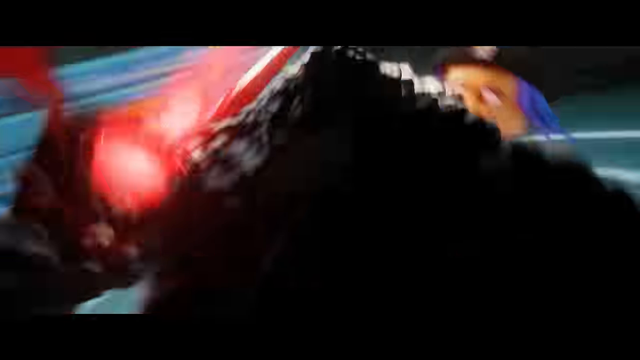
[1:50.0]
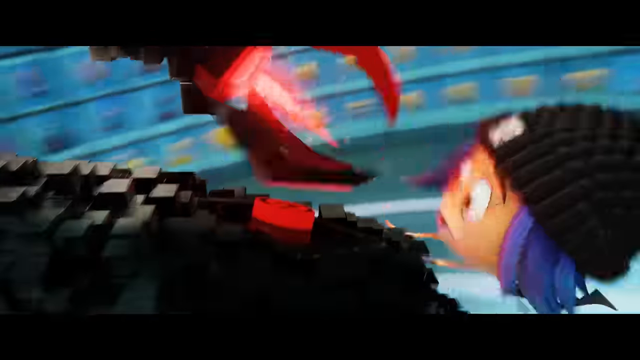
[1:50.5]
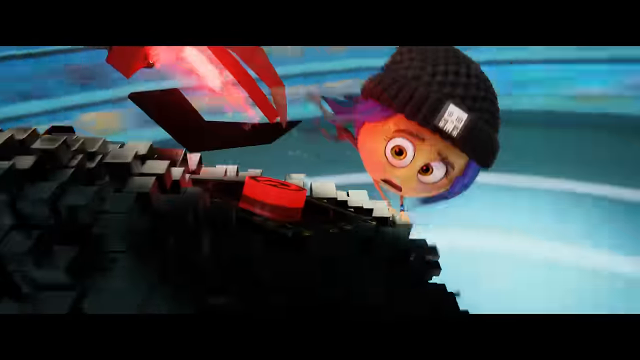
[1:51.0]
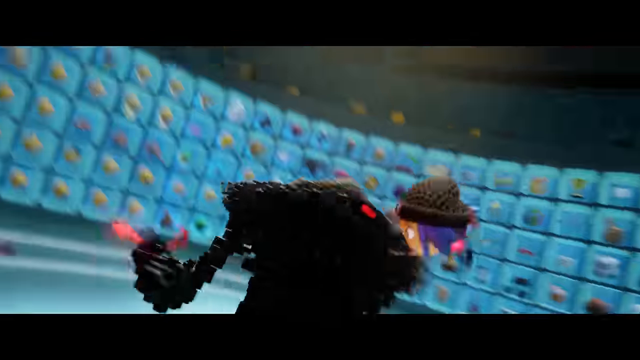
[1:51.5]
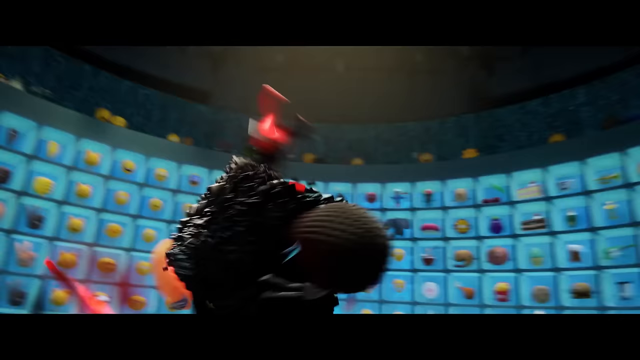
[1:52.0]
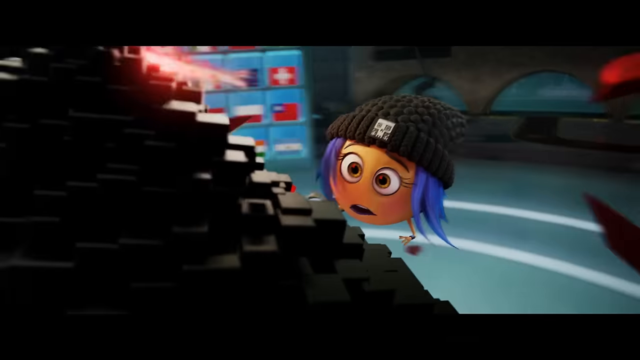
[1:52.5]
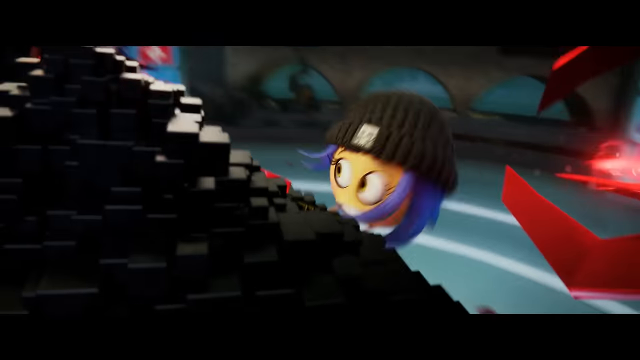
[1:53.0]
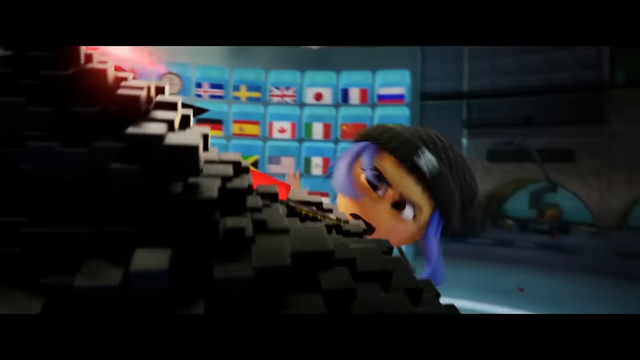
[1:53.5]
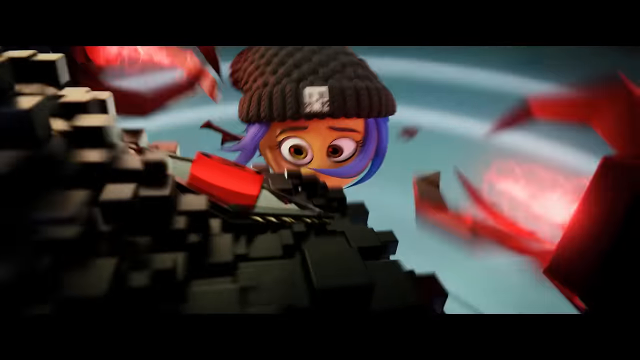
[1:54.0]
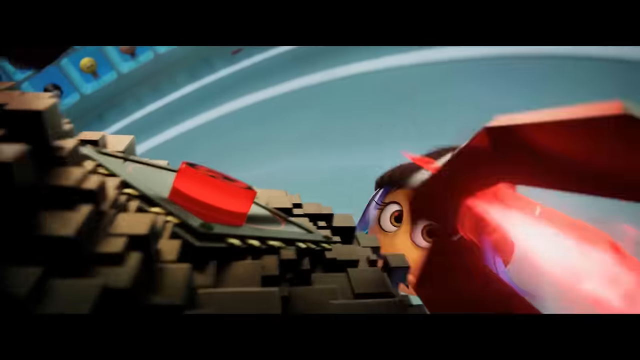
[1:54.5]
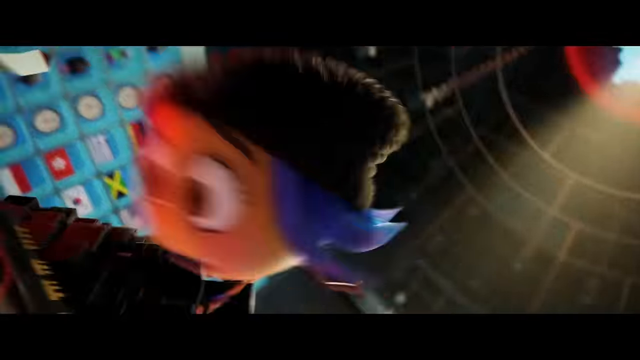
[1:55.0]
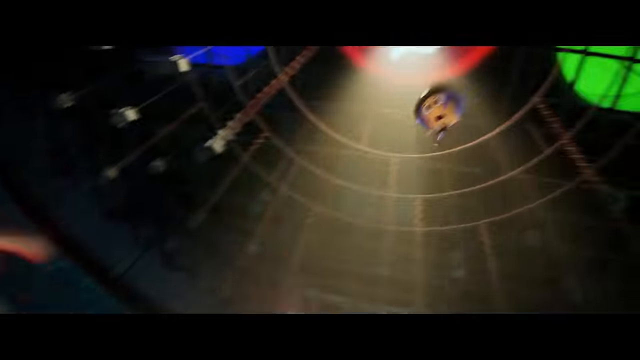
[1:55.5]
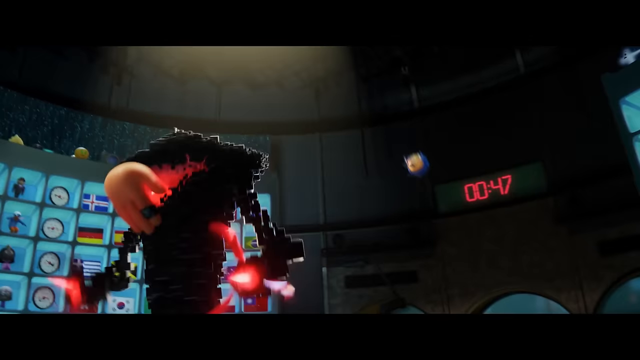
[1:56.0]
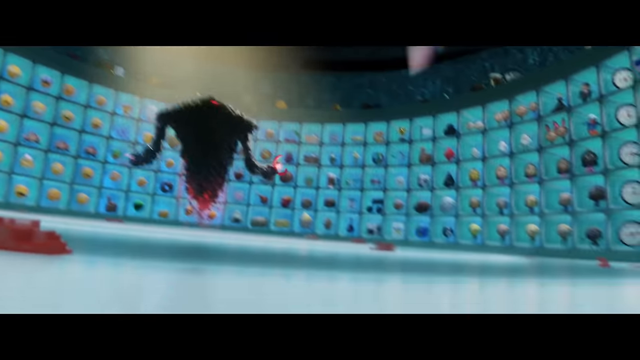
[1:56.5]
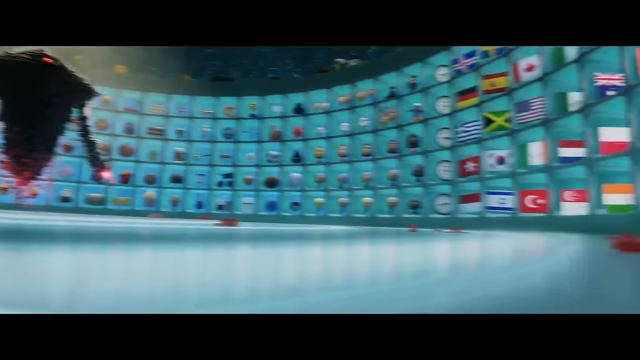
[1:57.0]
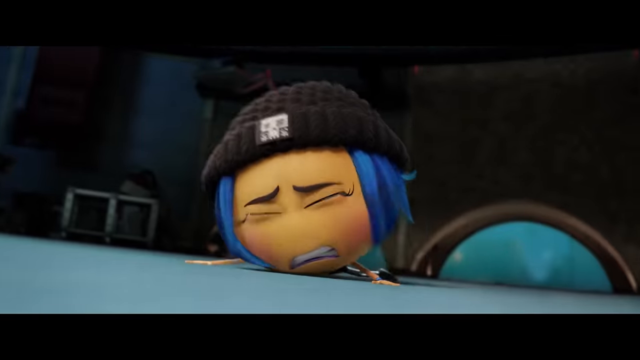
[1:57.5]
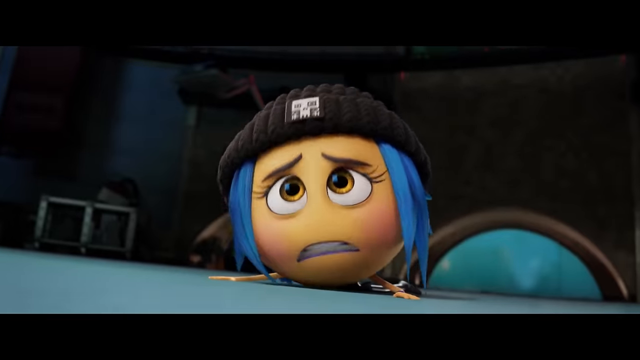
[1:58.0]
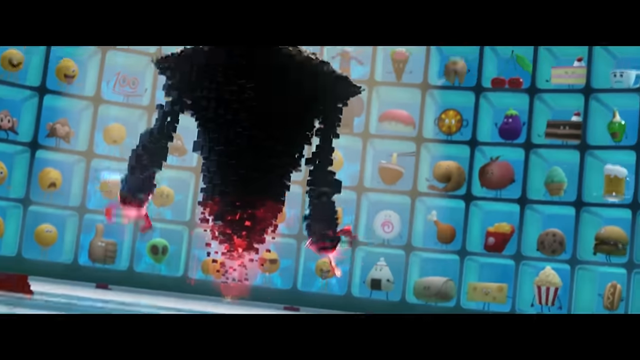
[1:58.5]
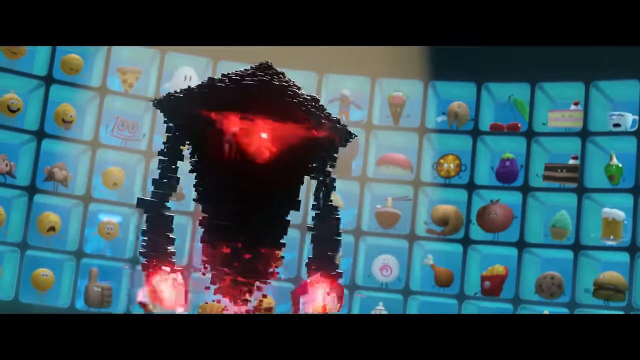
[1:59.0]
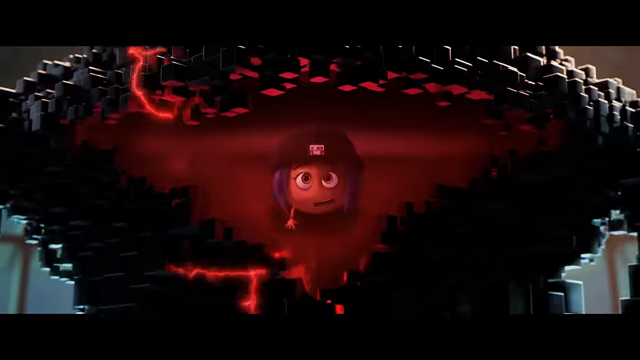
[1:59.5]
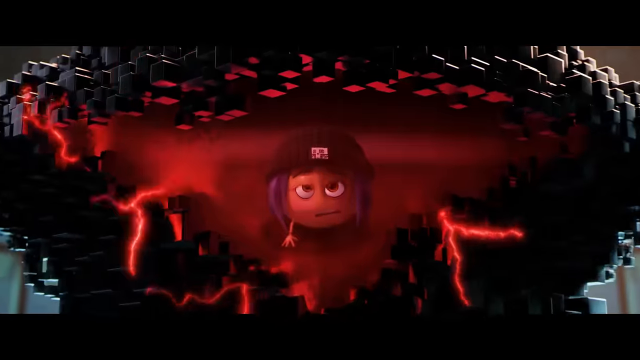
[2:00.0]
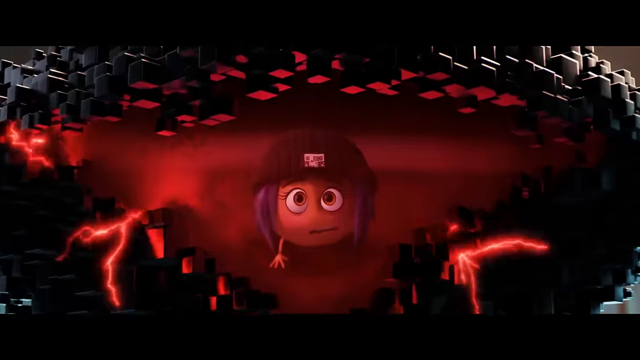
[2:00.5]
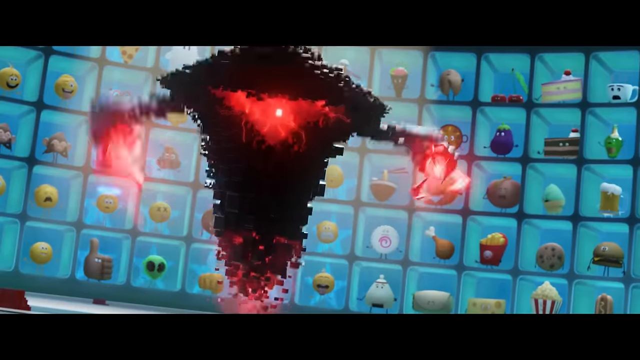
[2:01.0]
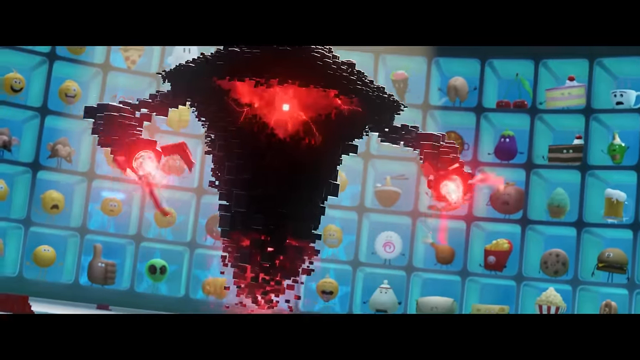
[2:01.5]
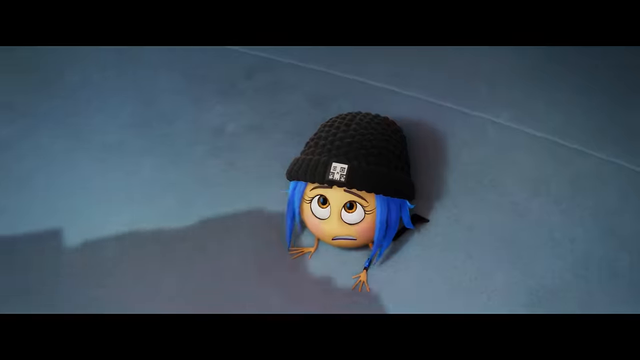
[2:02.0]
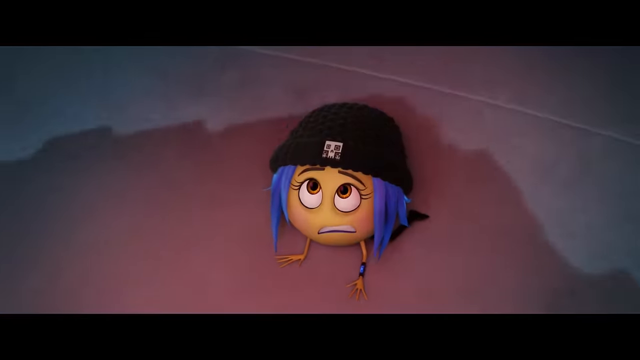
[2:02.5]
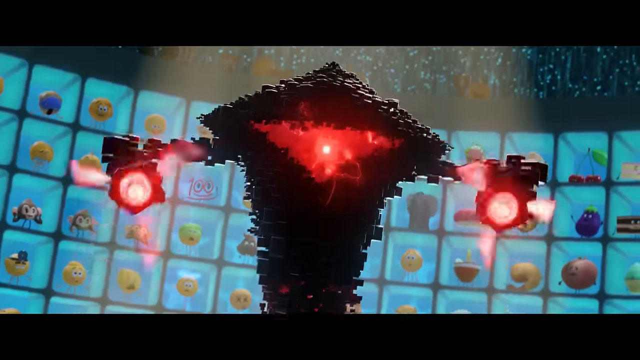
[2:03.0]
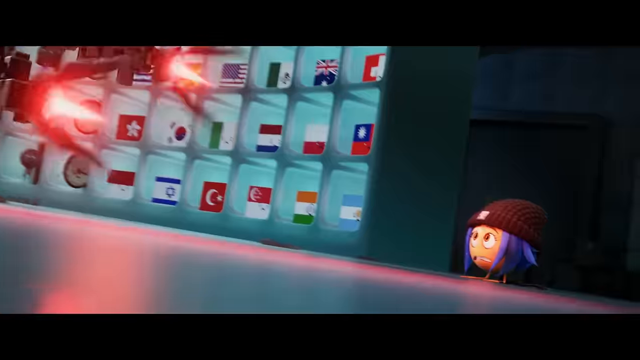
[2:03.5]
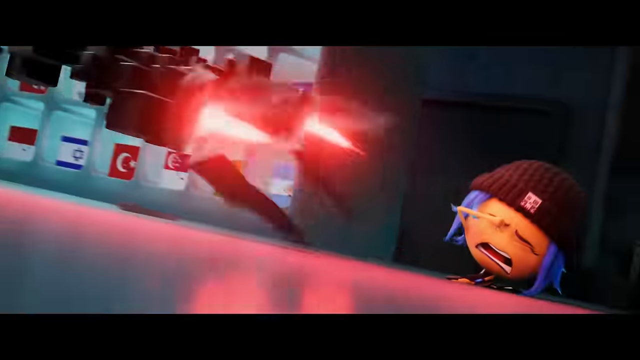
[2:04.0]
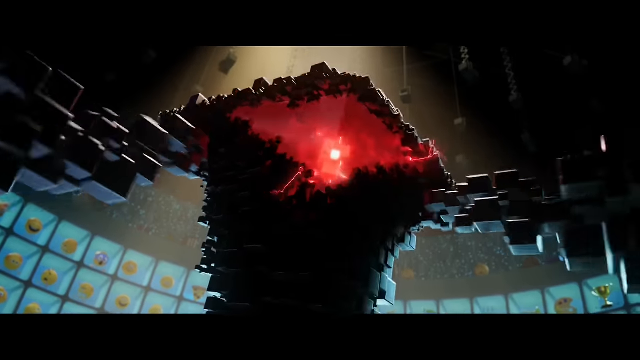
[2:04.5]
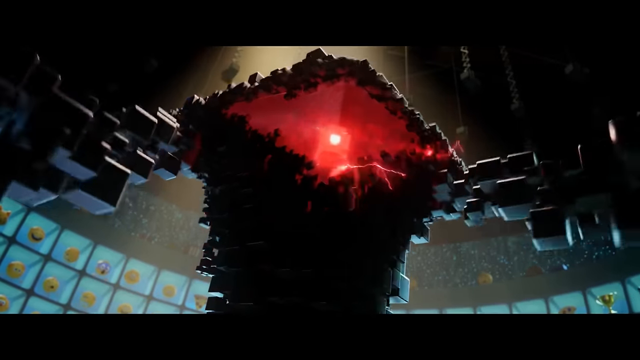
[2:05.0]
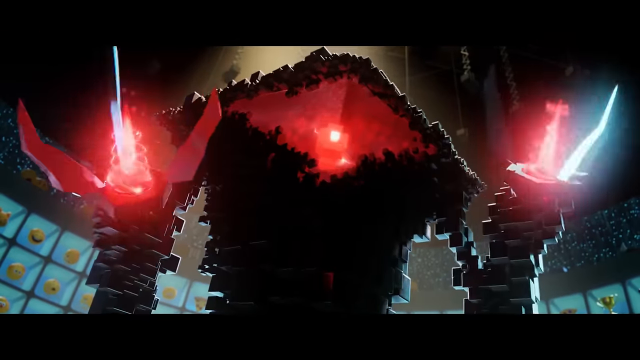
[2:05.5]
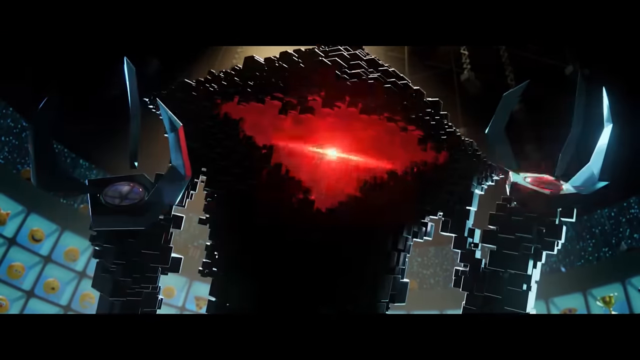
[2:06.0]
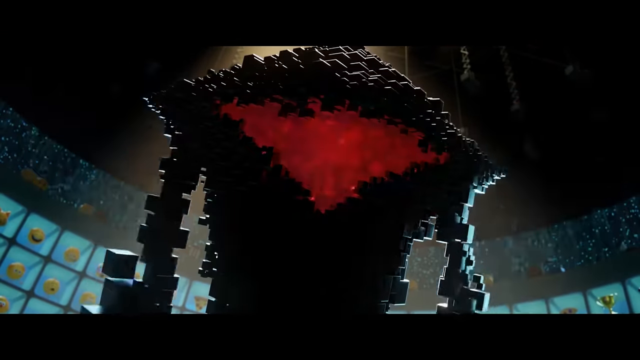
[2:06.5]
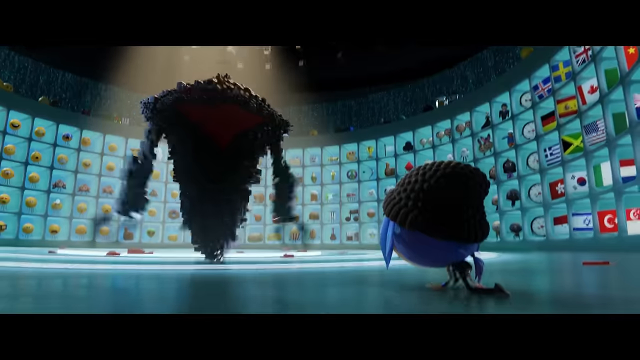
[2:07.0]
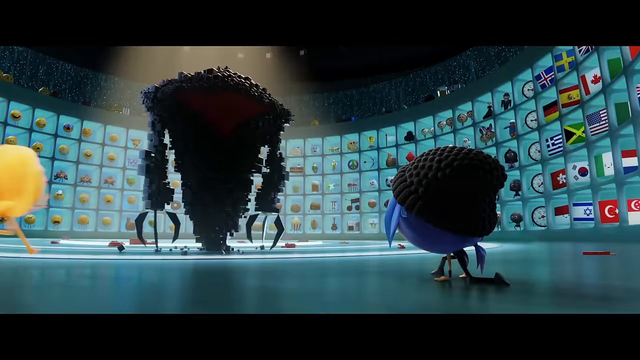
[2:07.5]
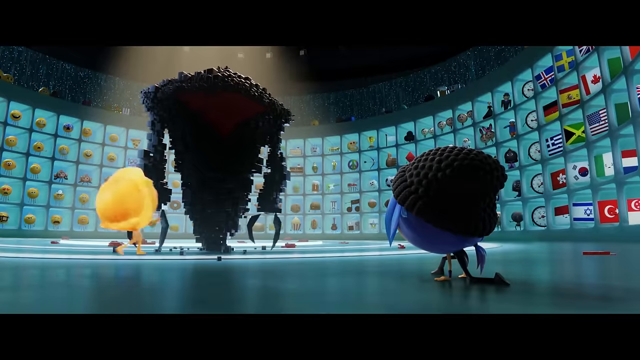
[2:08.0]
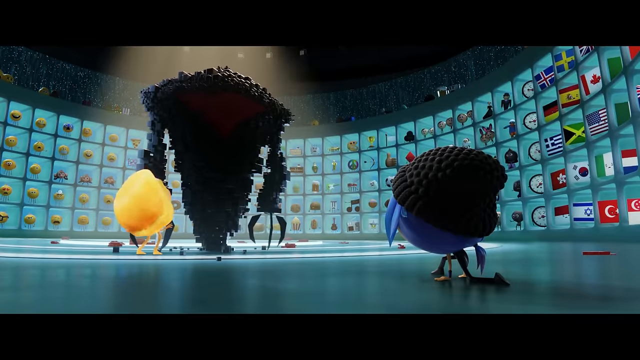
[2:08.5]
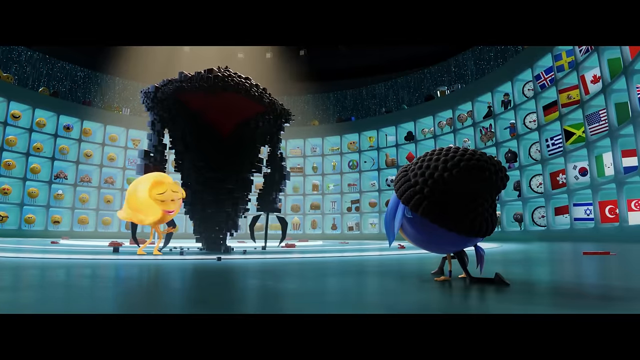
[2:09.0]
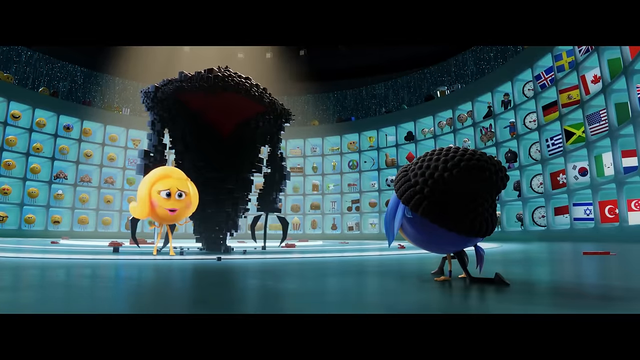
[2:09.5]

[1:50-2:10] The female character is on top of the robot's head, trying to press the switch off button, while the palm is also on top of the robot, trying to distract it. The female character, who has blue hair and a black hat with a QR code, jumps off the robot and falls to the ground. The robot tries to shoot her and charges a blaster at her while she looks scared, but it shuts down as if someone pressed the switch from behind. Smiler slides toward the front of the robot, still talking and smiling. The timer is still counting down, at one minute. The emojis in the locked chambers watch the situation unfold.